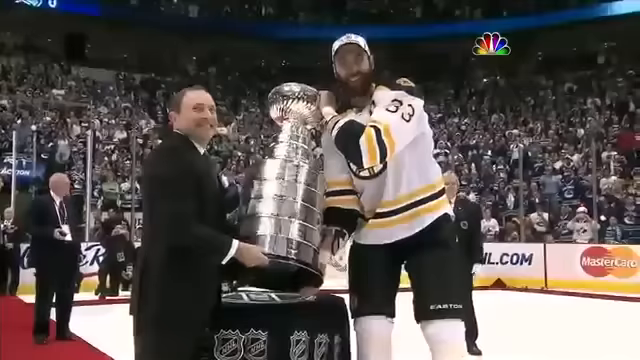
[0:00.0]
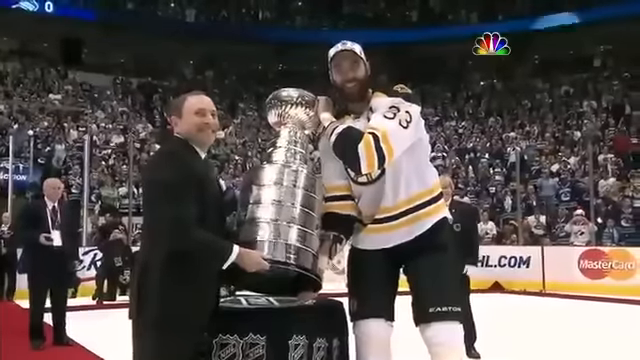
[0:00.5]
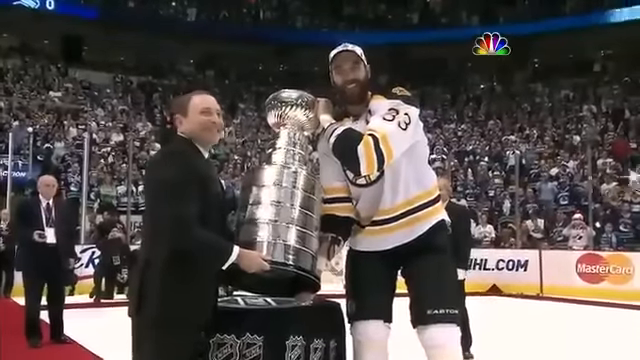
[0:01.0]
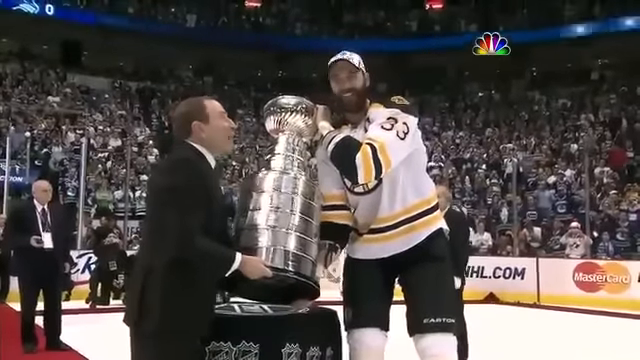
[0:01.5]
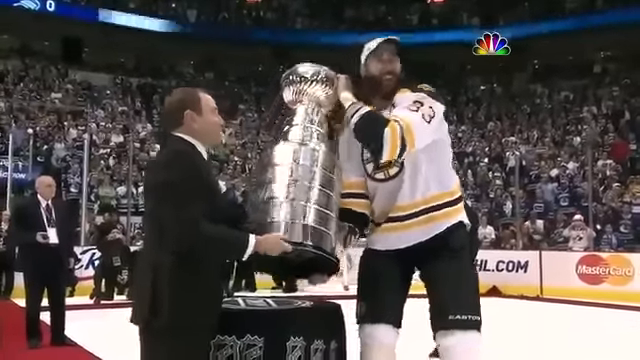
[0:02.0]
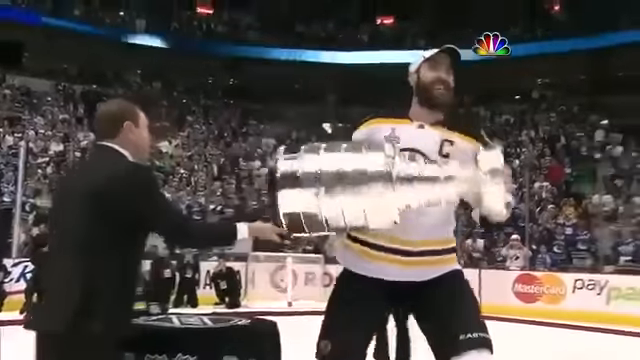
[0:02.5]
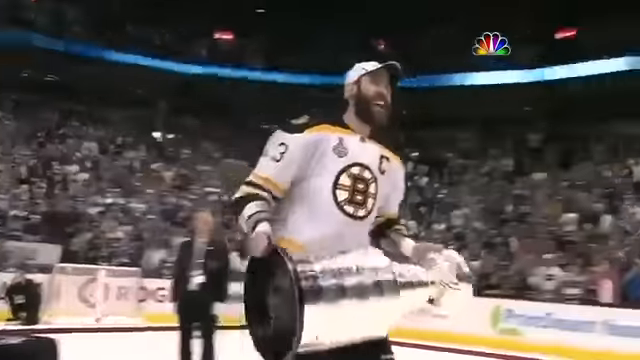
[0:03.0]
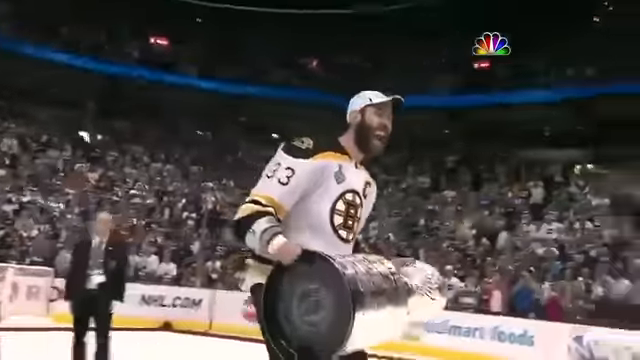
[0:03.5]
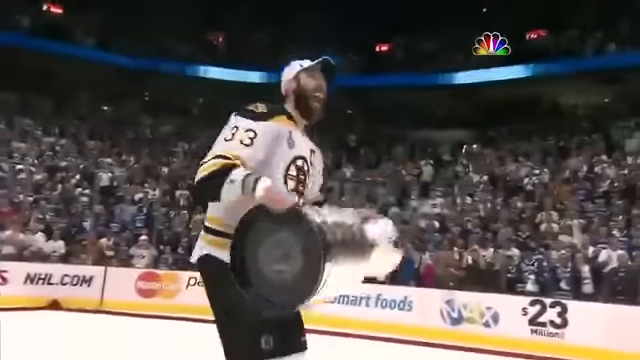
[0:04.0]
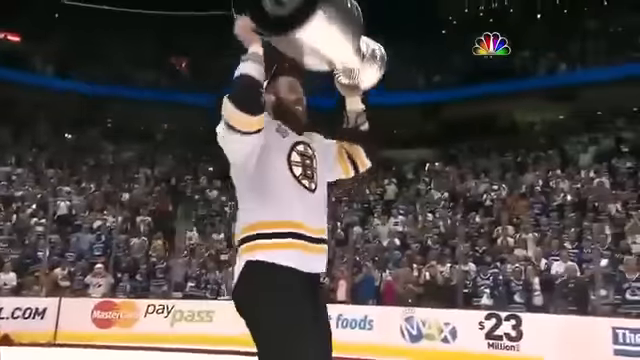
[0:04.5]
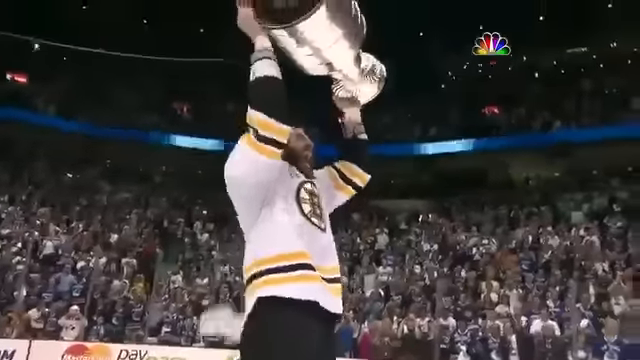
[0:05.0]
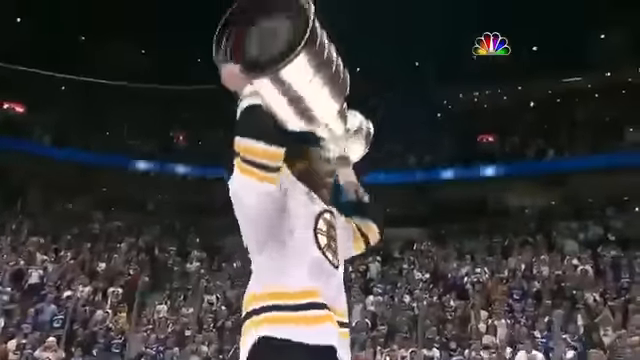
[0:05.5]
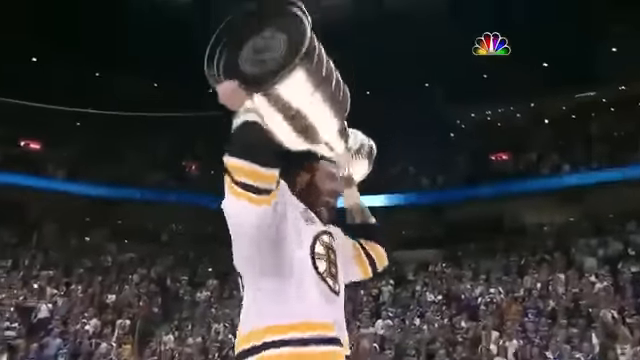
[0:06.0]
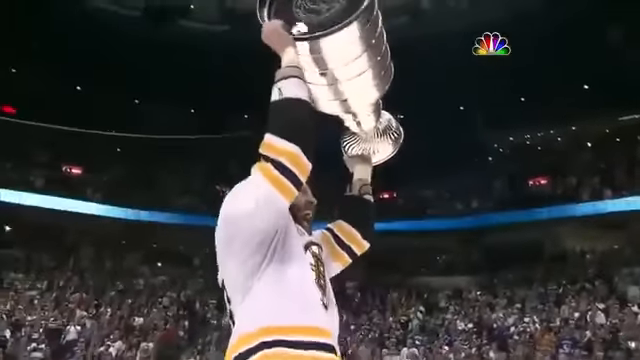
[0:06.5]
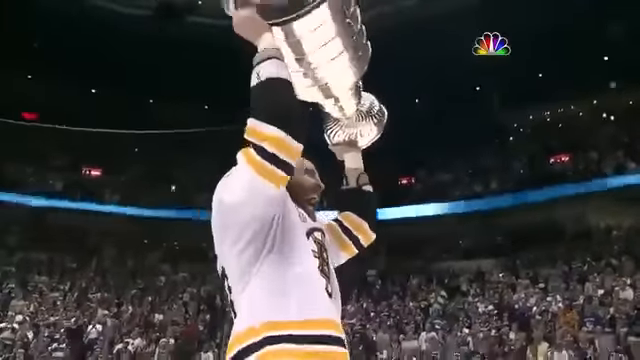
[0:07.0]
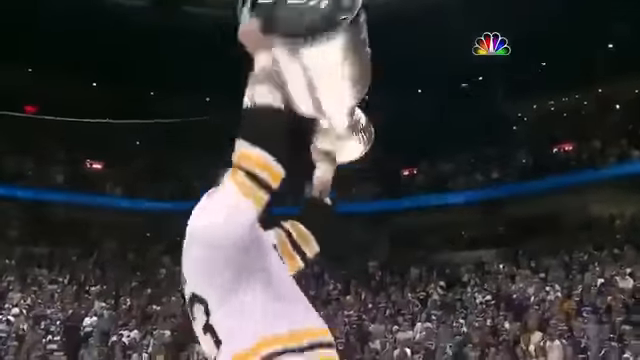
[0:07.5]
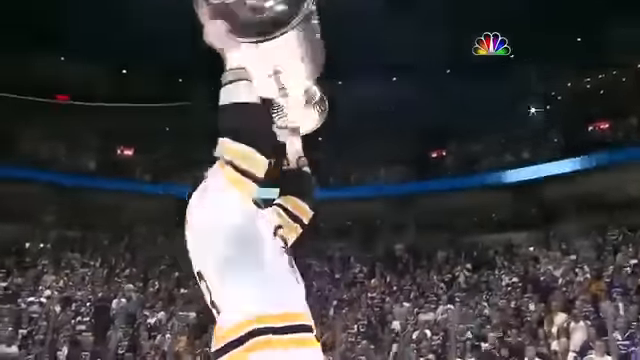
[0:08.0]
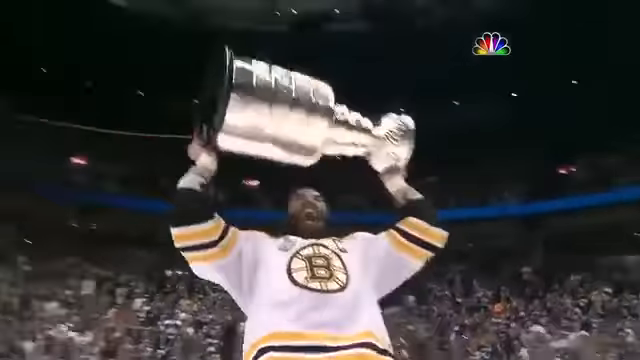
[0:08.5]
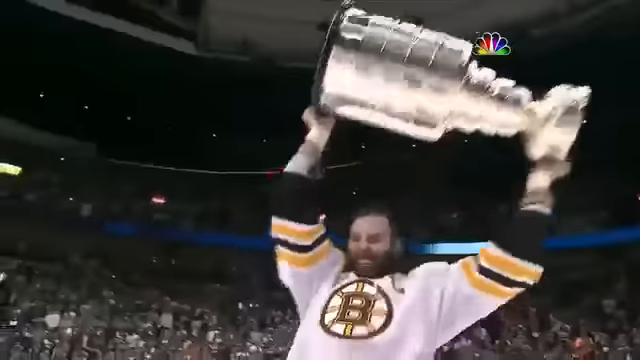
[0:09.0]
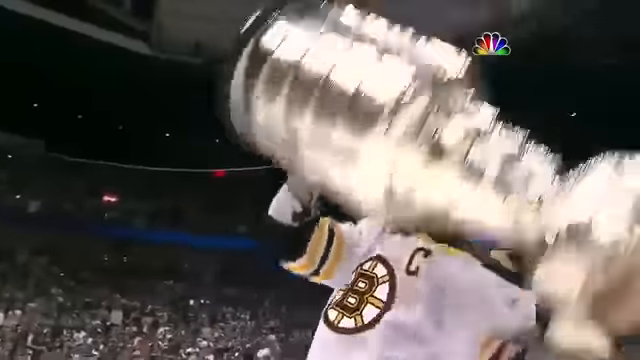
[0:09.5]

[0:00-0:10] The video opens on what looks like a Stanley Cup celebration on the ice. A player in a Boston Bruins uniform wears the white jersey with black and yellow trim, with a captain's "C" on the upper left breast and the number 33. He leans over and is handed the cup by a much smaller man in a dark suit and tie. Both smile as though facing a camera, though they are not directly facing the viewer. They lift the cup together, and then the player lifts the Stanley Cup over his head, skates around toward the center of the ice, holds it up and gestures toward the crowd, celebrating. The NBC peacock logo is in the upper right. The Stanley Cup is the standard tall, shiny silver trophy. A few other people mill around on the ice, and a good number of the crowd in the stands are cheering.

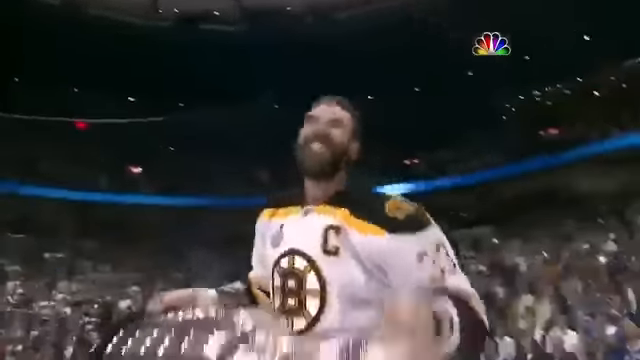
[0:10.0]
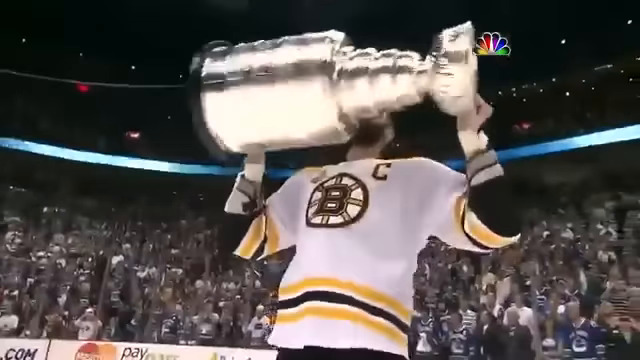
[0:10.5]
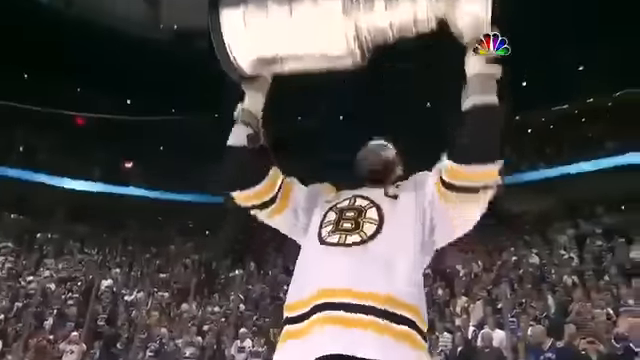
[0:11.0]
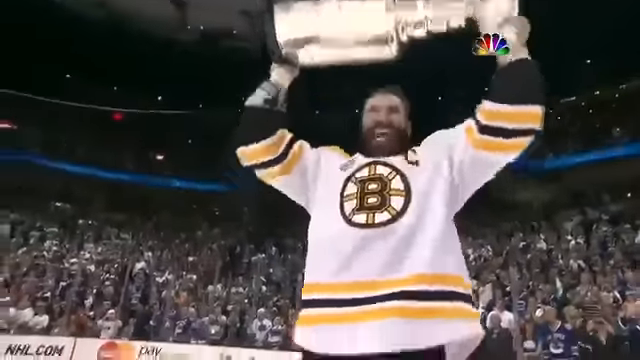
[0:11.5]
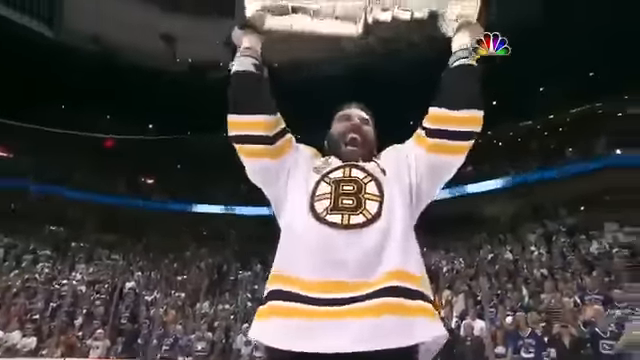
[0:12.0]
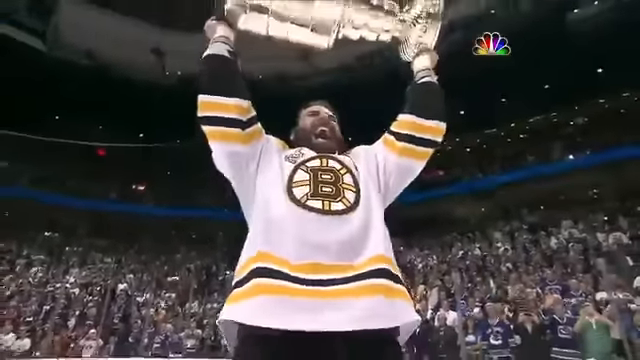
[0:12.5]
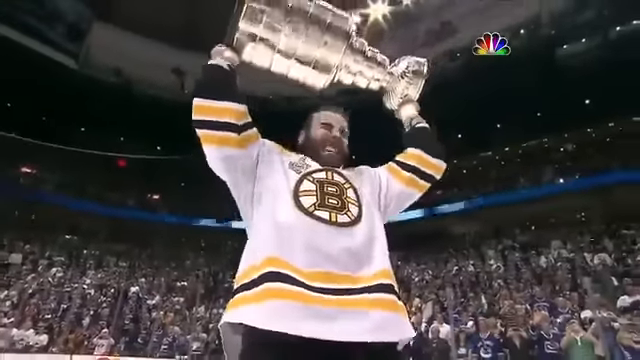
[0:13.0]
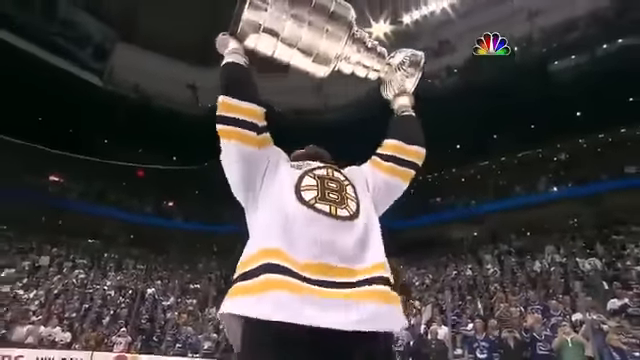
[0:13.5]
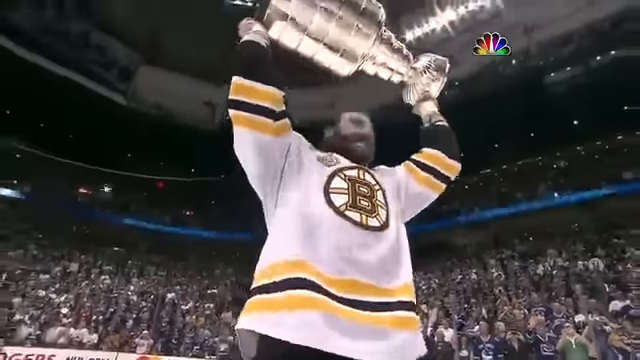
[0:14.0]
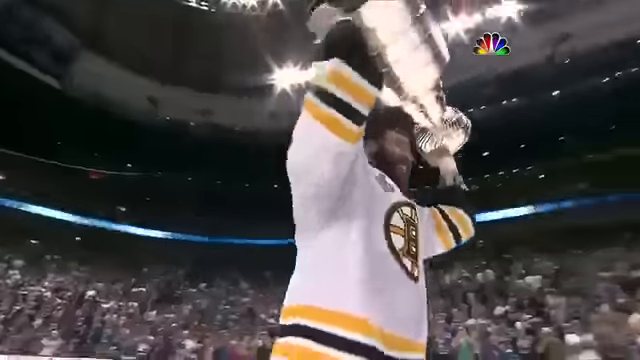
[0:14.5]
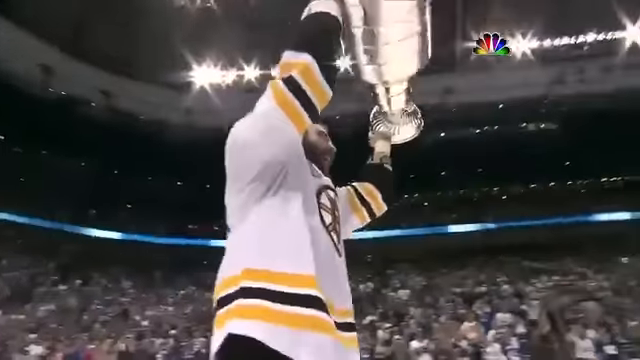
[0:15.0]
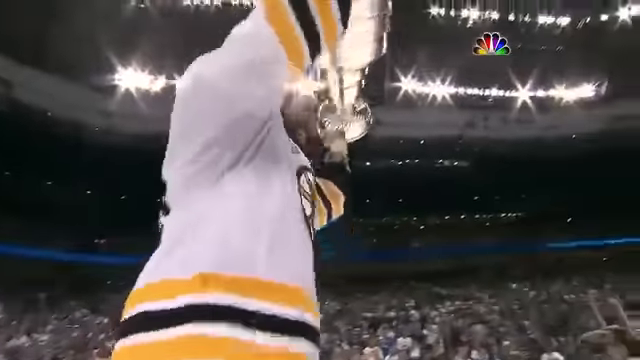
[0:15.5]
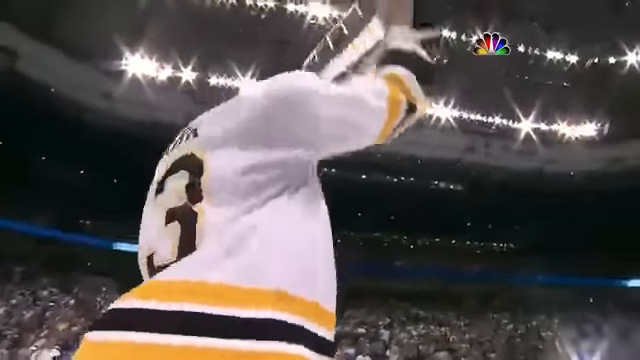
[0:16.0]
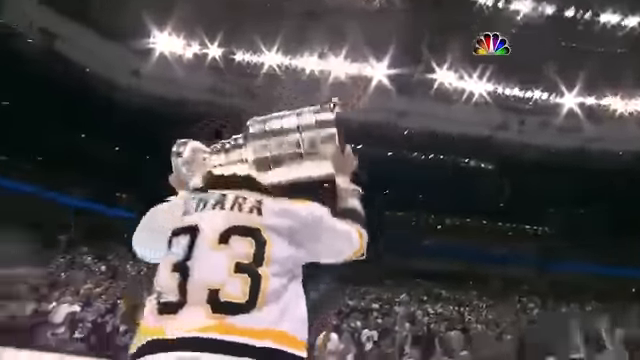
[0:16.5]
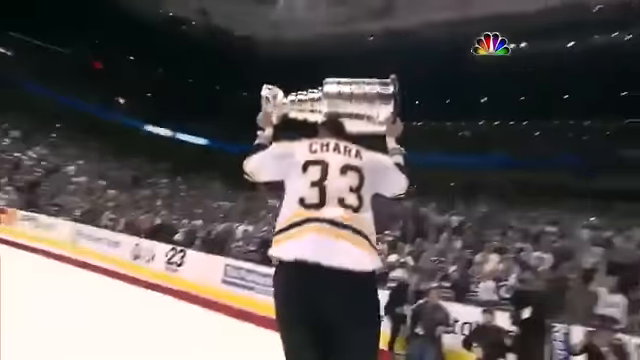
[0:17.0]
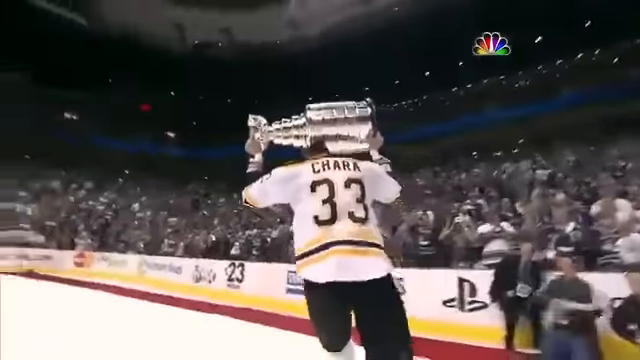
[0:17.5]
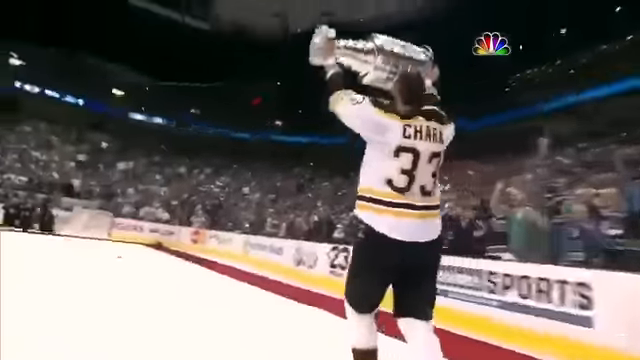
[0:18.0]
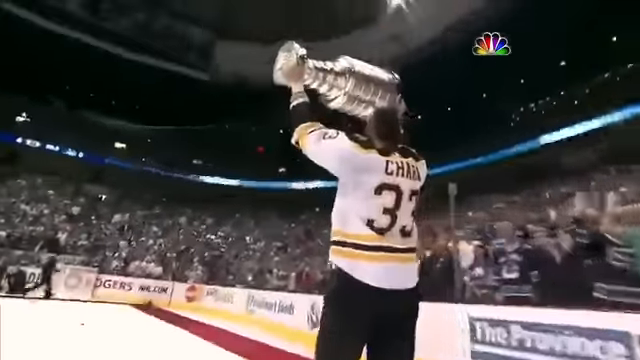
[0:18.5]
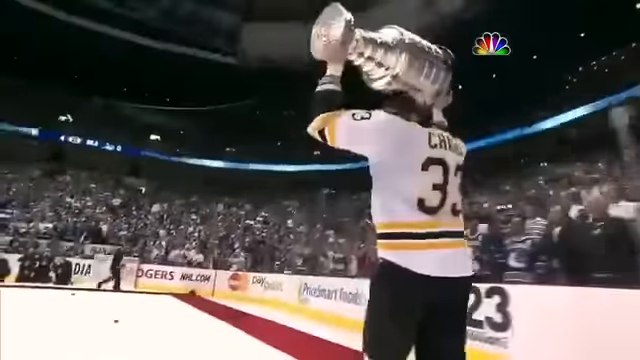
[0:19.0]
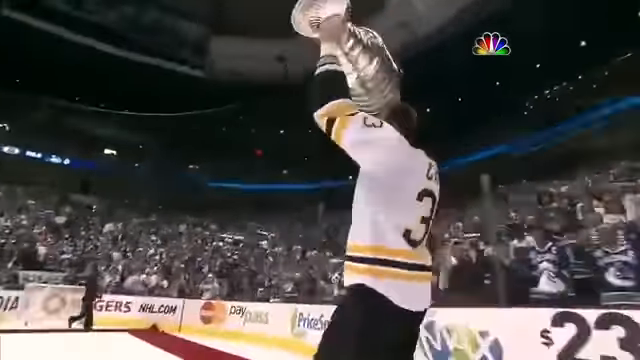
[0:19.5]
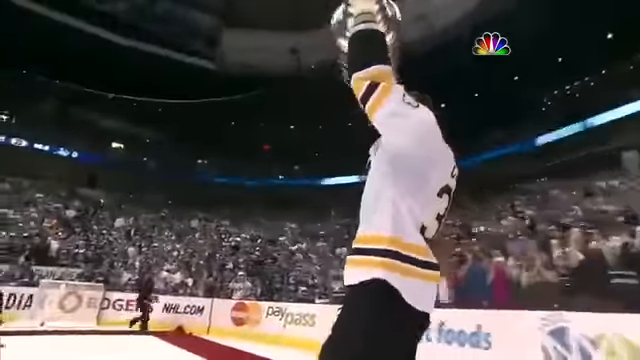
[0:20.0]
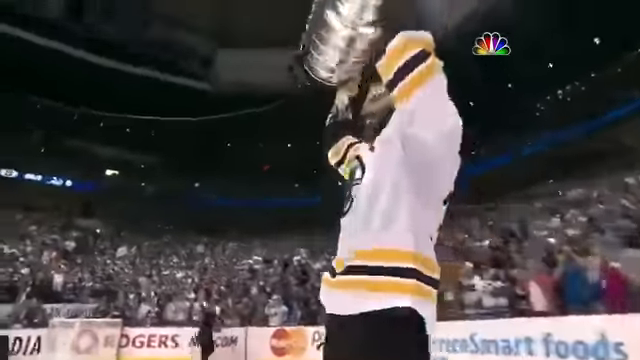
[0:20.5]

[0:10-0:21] The player pulls the Stanley Cup down for a bit and kisses it, then holds it up again, kind of jerking it upward. As he skates around, the back of his jersey shows his last name, "Chara". An upward shot shows him as though the camera is low near the ice. He skates toward the corner and then turns around smiling. He is a tall Caucasian man with a big full beard and a bushy mustache, probably around 6'4". No other hockey players are on the ice at this time. An upward shot shows the stadium, apparently Boston Garden, which is full, and many flashbulbs pop as the Bruins apparently have won the Stanley Cup.